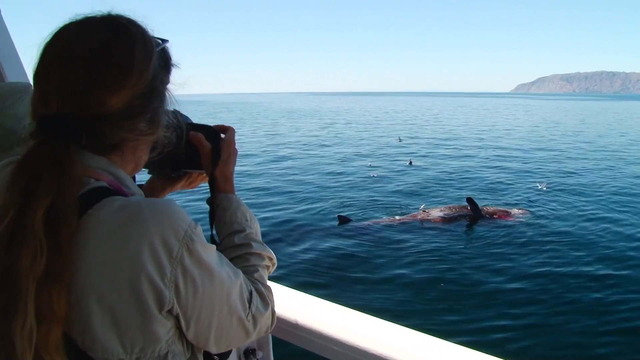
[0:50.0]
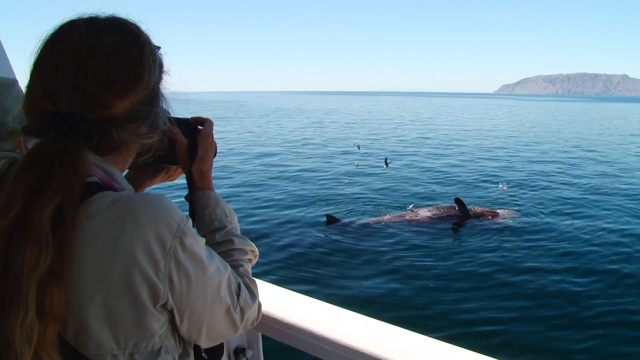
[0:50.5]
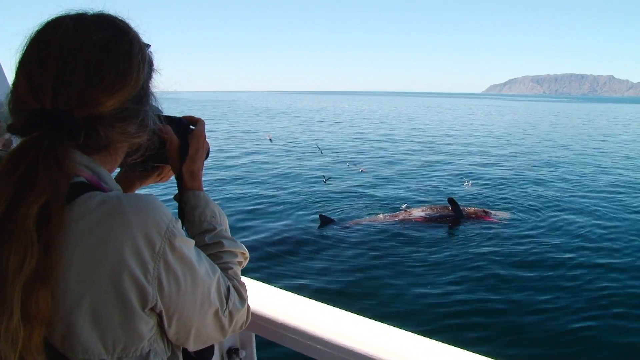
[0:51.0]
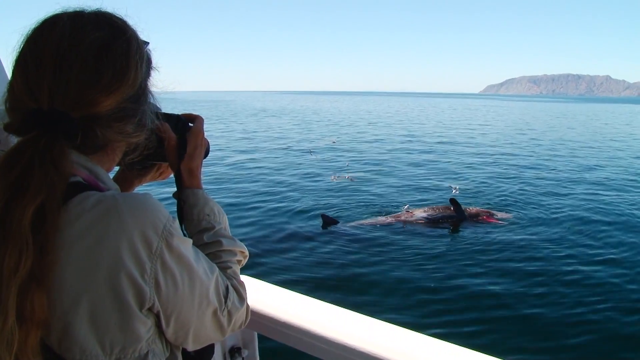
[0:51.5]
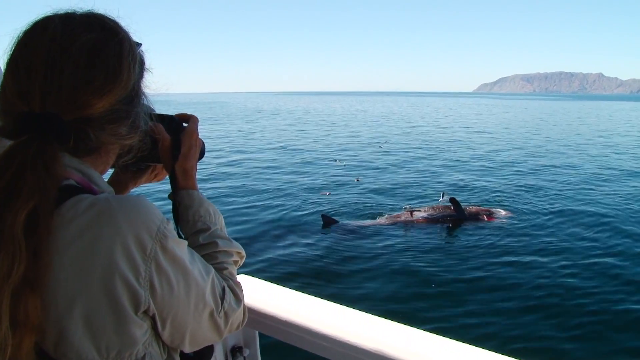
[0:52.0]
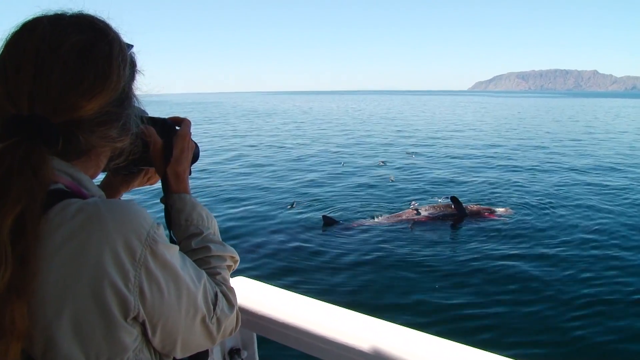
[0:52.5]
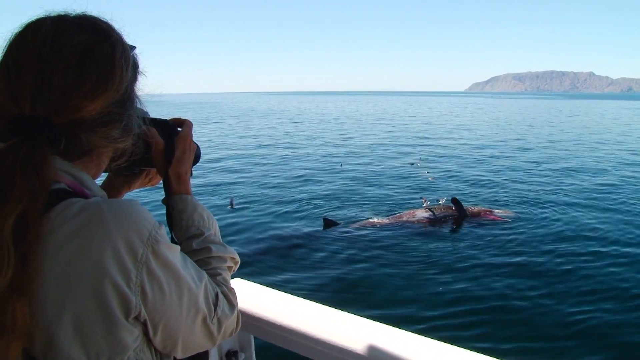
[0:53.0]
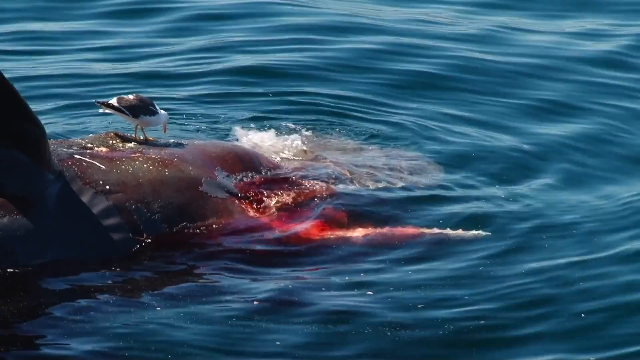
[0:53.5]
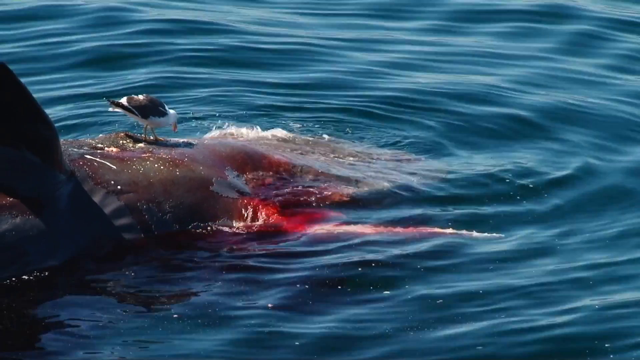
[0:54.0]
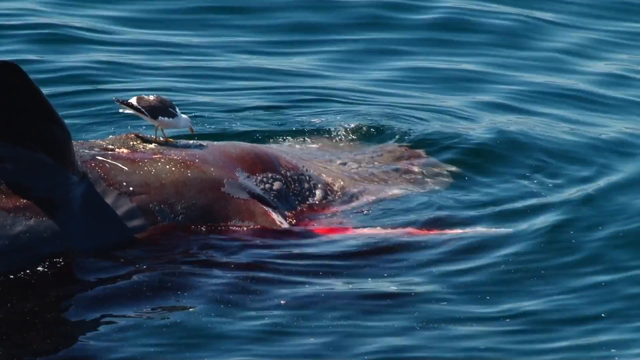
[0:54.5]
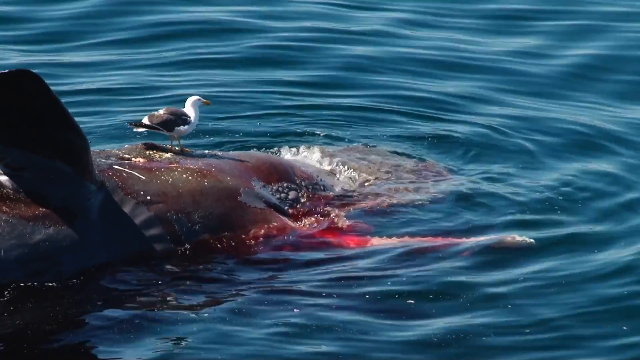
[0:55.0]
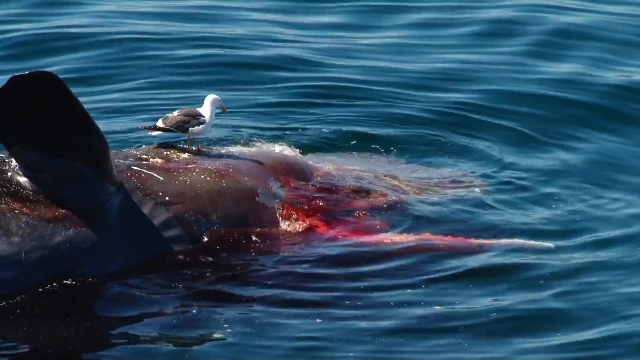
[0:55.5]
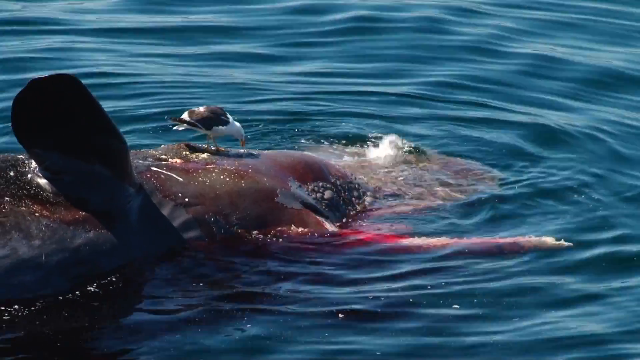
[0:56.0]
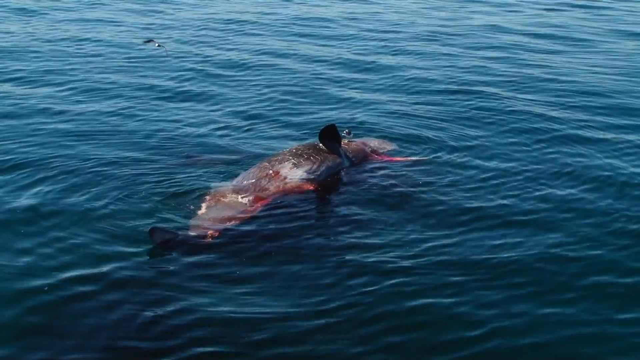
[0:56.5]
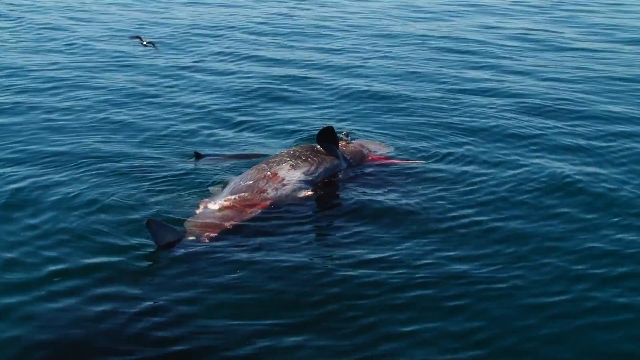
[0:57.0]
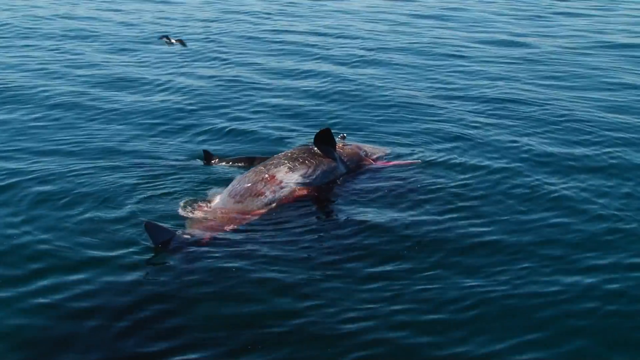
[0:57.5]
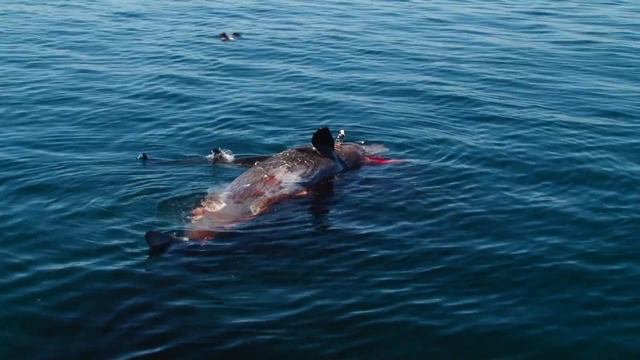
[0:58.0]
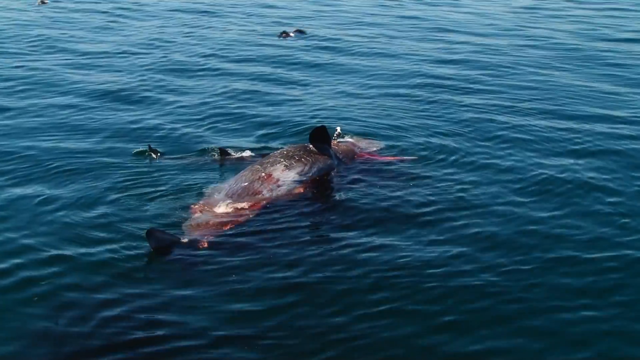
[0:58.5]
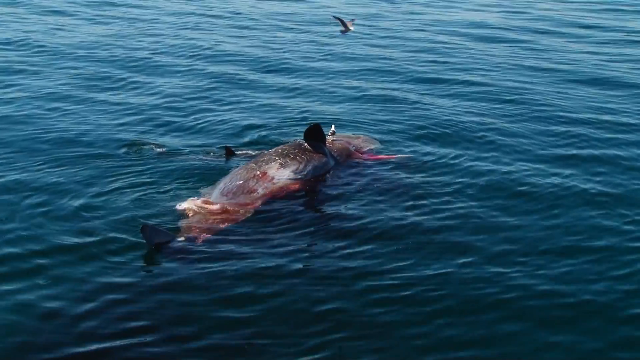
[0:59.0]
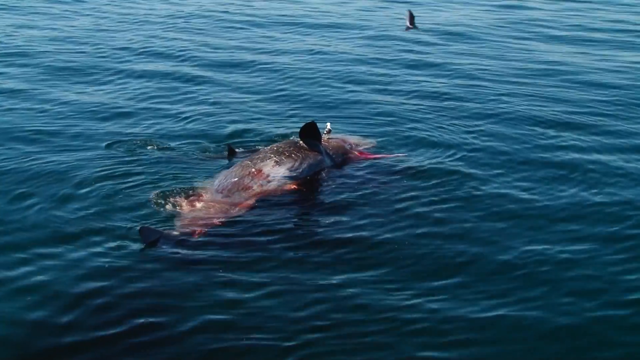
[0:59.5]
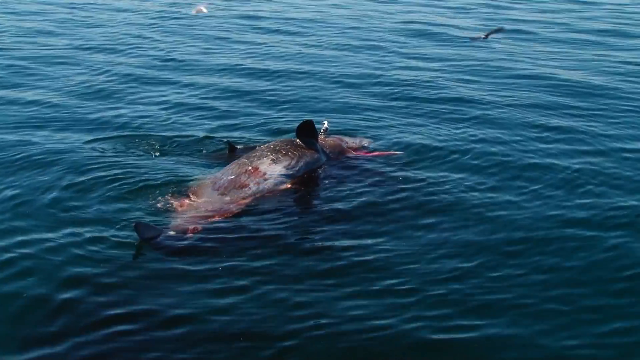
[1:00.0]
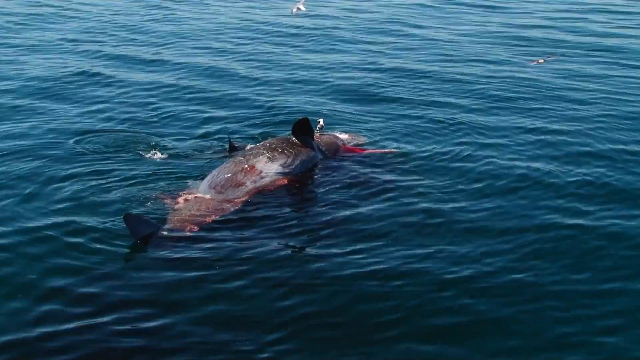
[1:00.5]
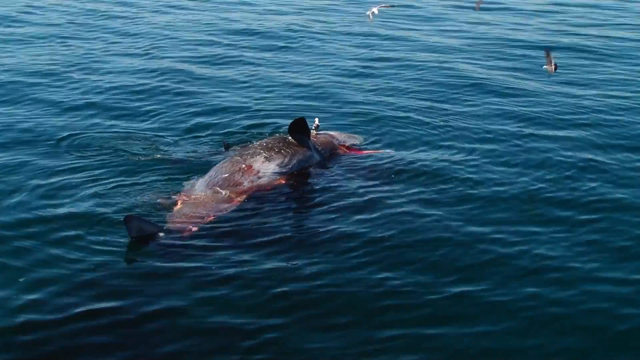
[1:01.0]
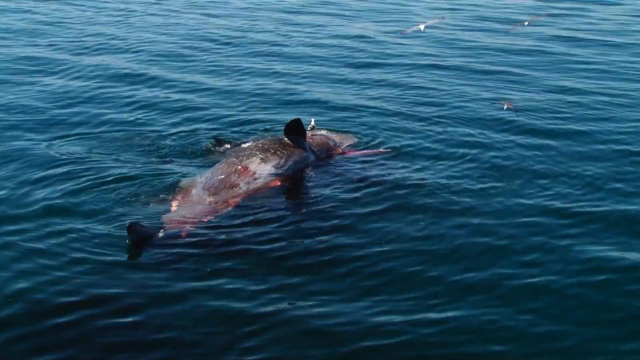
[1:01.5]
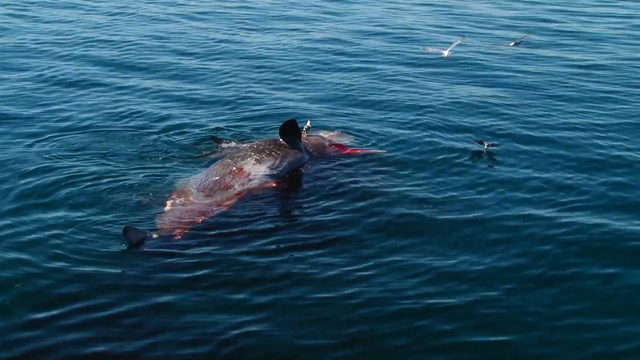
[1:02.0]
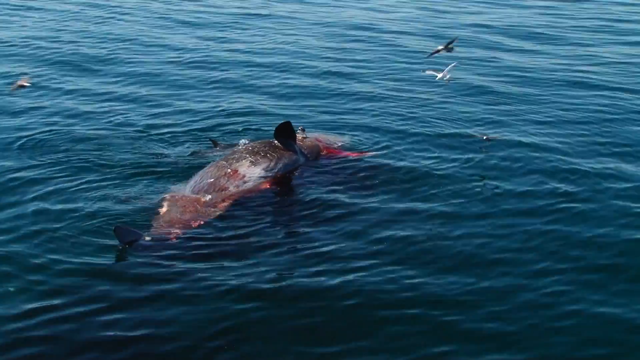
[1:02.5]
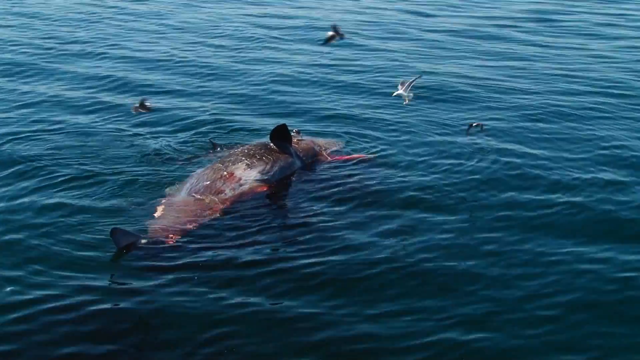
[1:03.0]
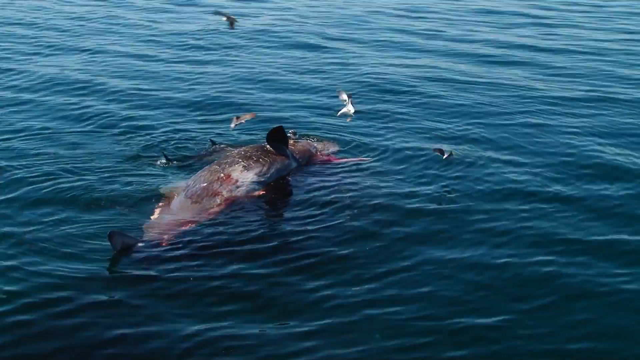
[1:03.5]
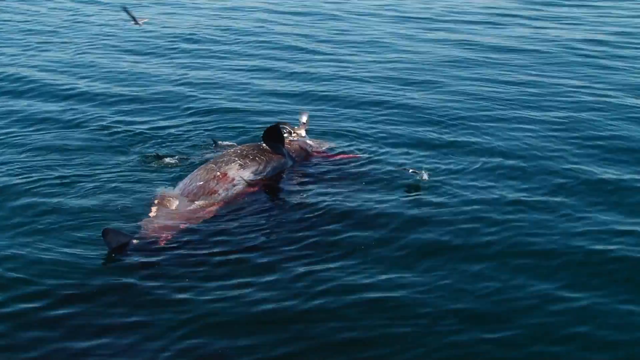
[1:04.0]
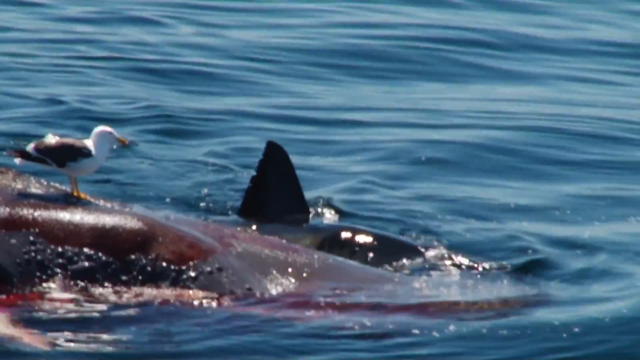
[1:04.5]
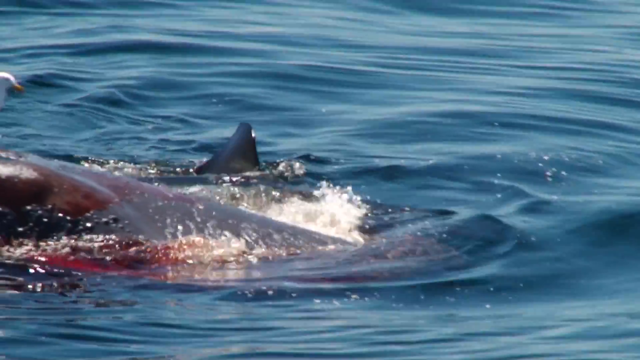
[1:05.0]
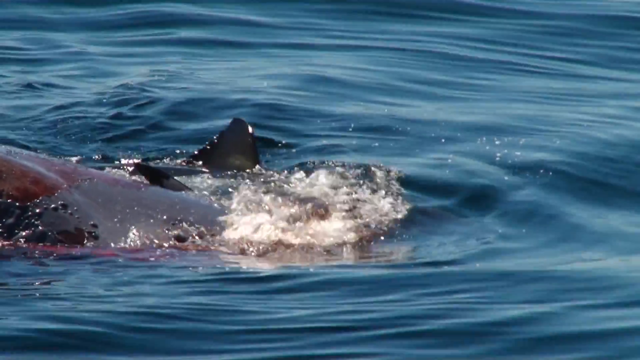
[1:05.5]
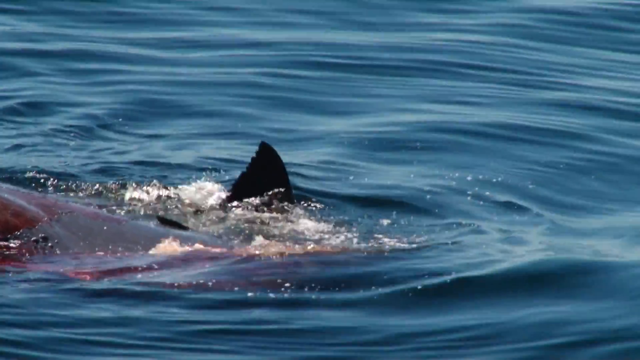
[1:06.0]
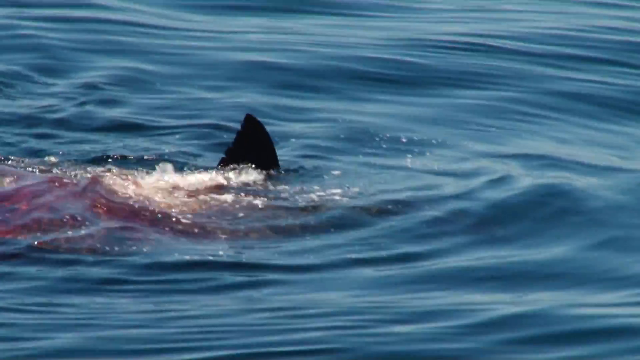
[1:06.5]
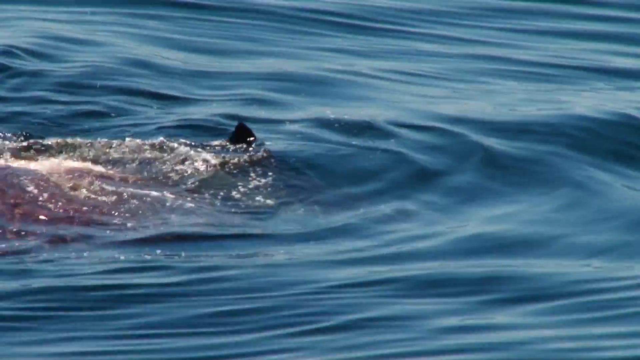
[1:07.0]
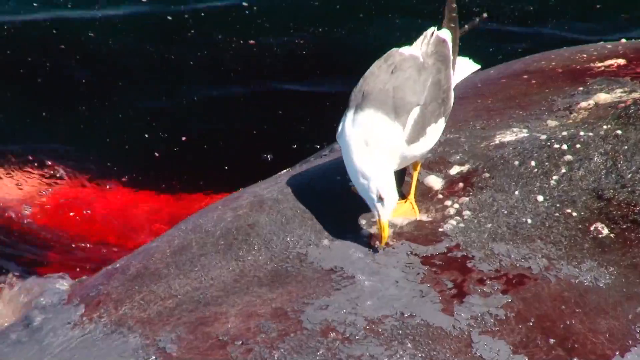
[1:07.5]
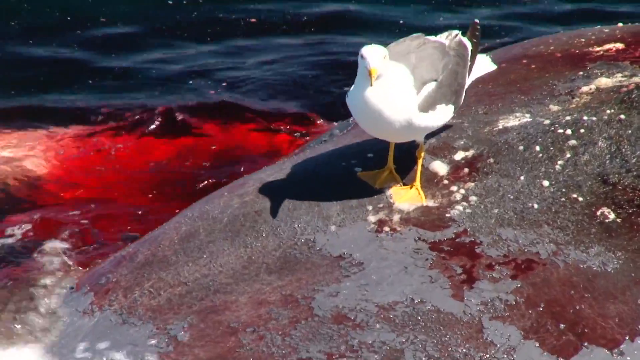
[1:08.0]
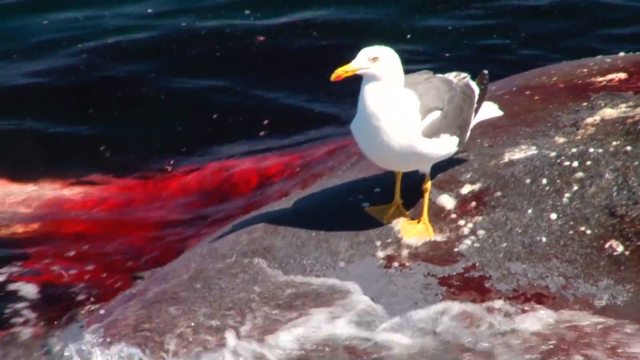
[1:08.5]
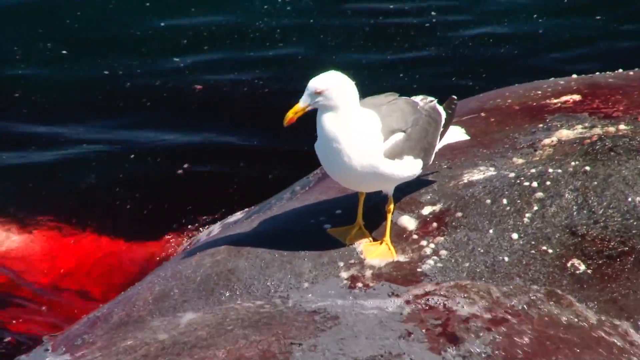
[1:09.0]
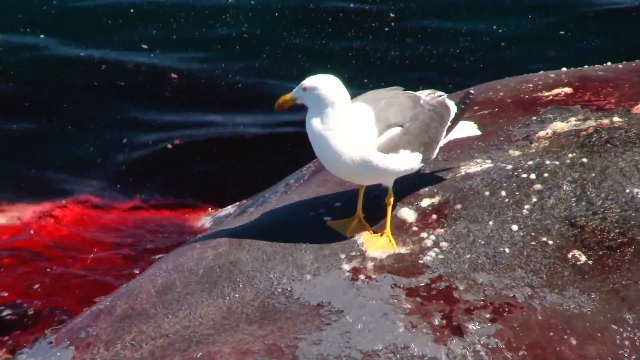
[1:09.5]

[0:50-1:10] A woman with sunglasses on top of her head, long dark hair, and a long-sleeve beige shirt has the strap of a bag over her shoulder. She holds a camera, apparently filming, and is off to the side of the boat, seemingly at the right back side. Off the side of the boat is the water and the whale, which is very likely dead. Fins of something appear, possibly sharks, and when the view homes in on the water, blood is visible. Birds sit on top of the shark, and more birds are in the water. The whale appears to have some type of growth on it. Waves move across the water. The animals may be eating the whale, as blood is coming from it.